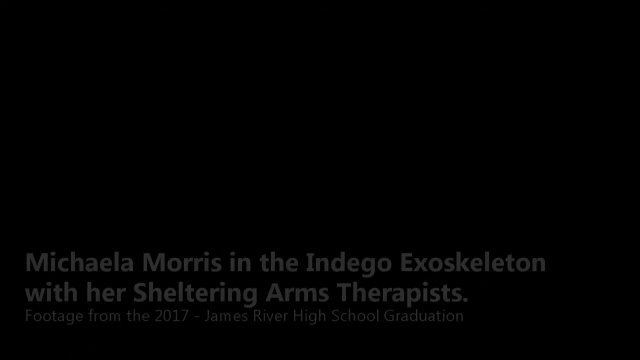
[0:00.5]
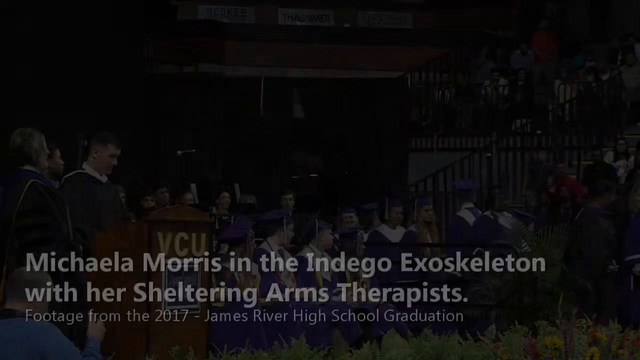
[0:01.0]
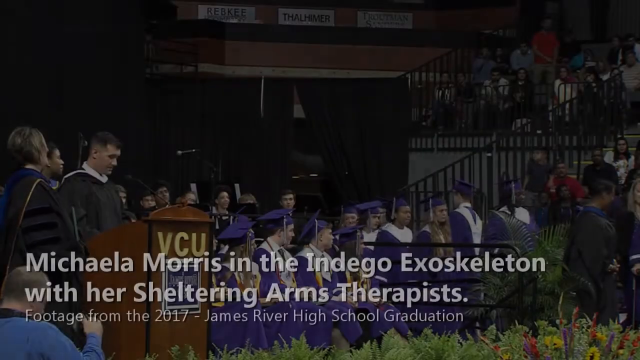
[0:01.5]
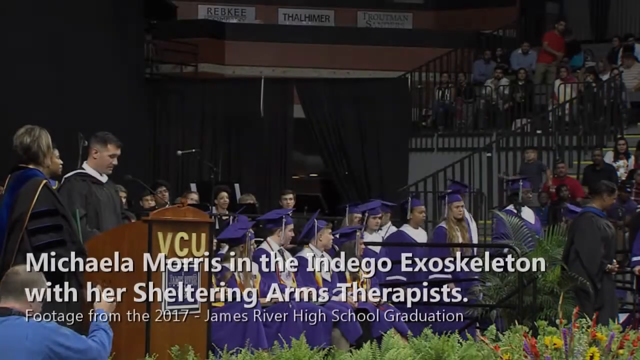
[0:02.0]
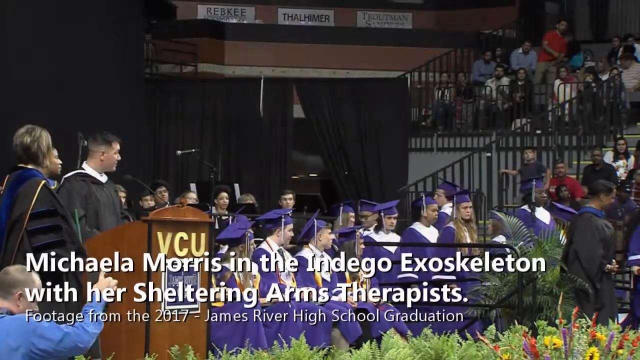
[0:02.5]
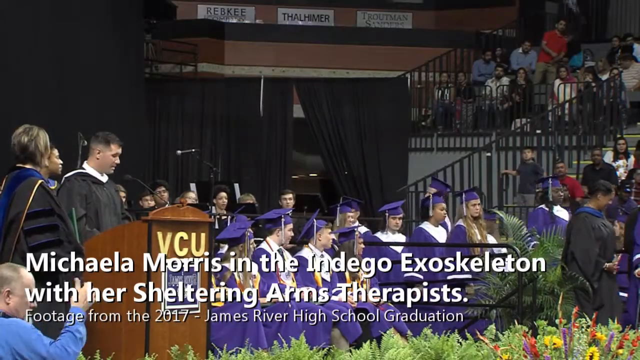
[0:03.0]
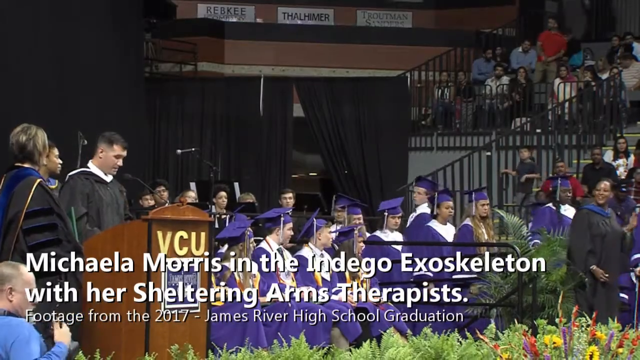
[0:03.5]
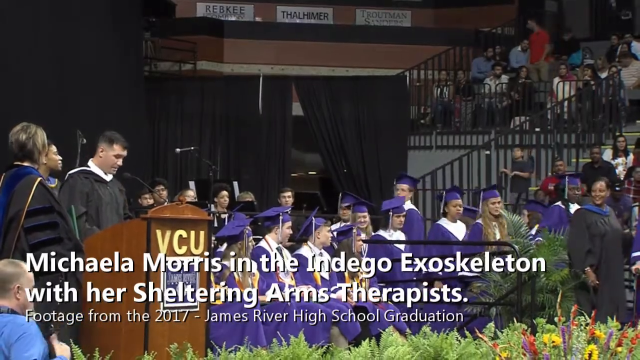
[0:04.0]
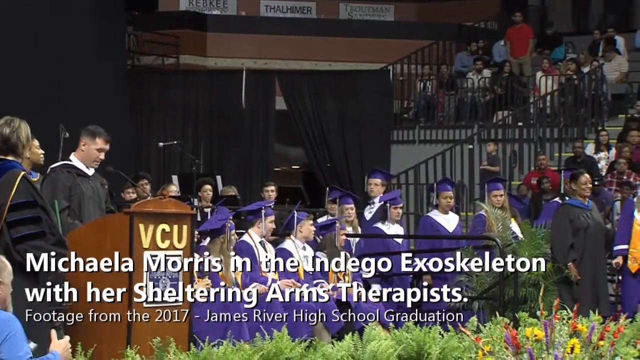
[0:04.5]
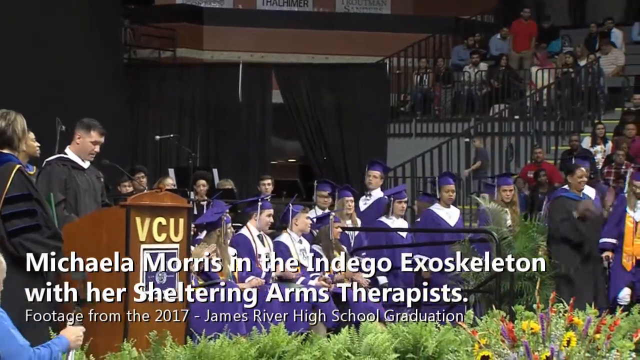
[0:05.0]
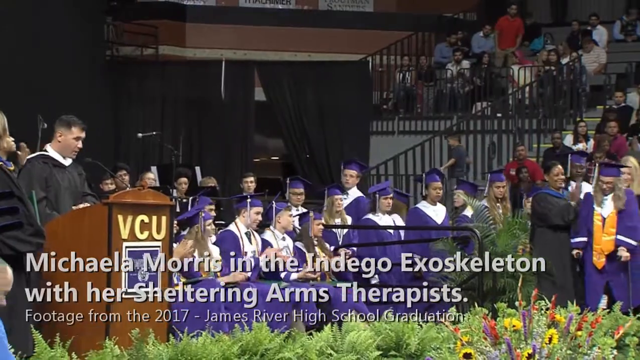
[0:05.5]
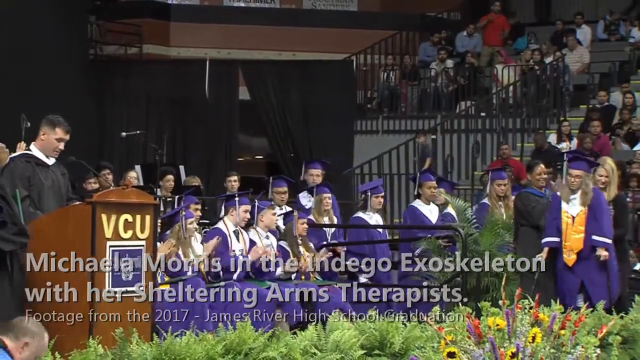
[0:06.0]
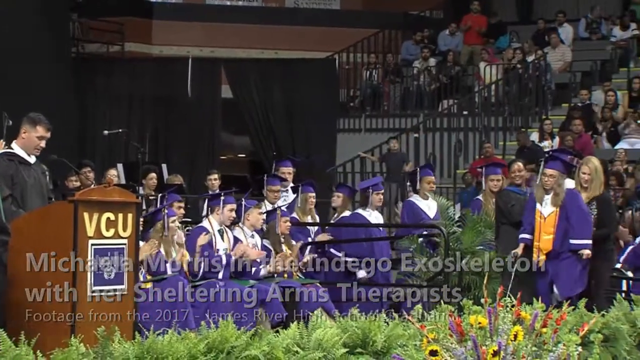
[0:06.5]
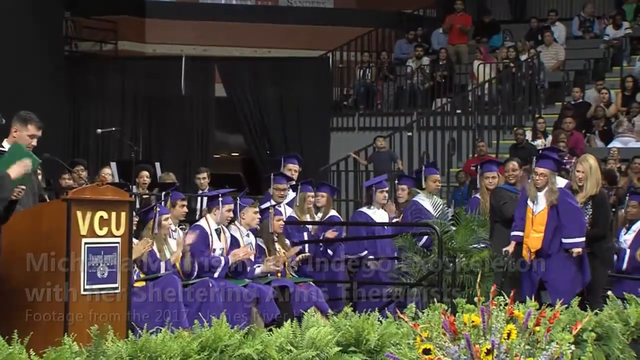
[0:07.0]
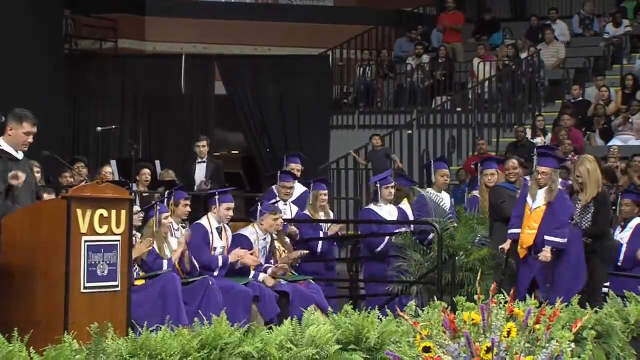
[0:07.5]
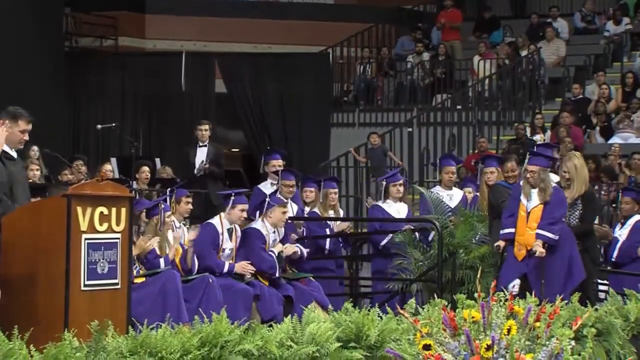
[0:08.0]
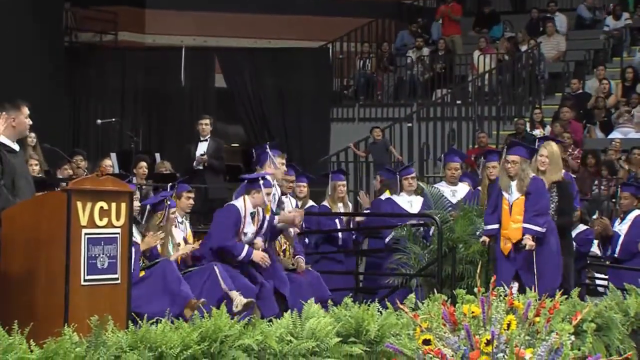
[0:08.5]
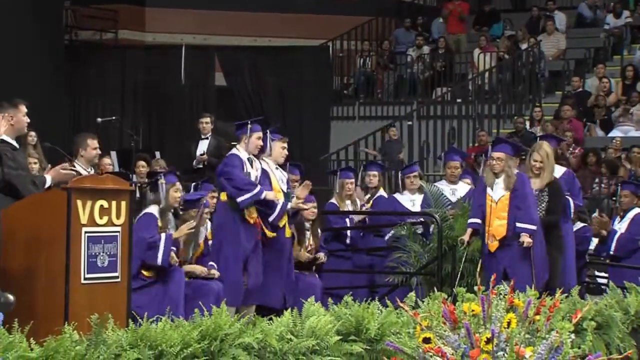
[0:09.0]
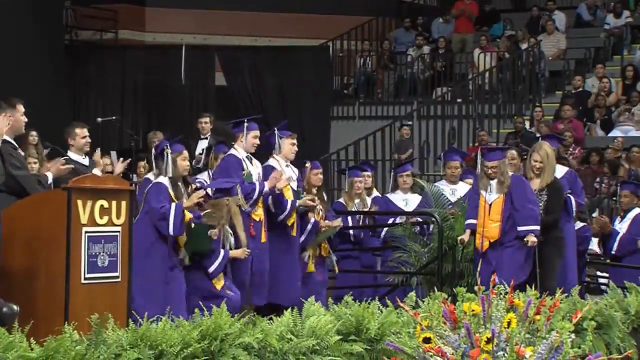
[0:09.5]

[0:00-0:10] Text at the bottom of the video reads "Mykala Morris in the Indigo Exoskeleton with her Sheltering Arms Therapist. Footage from the 2017 James River High School Graduation." A young woman in purple graduation attire walks with two canes at the 2017 James River High School graduation.